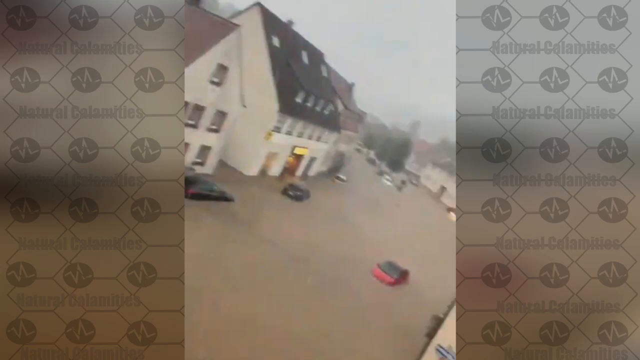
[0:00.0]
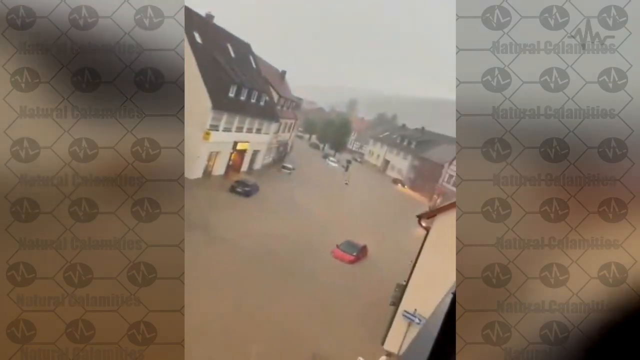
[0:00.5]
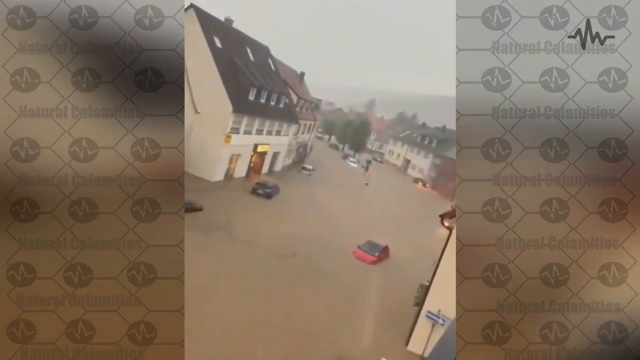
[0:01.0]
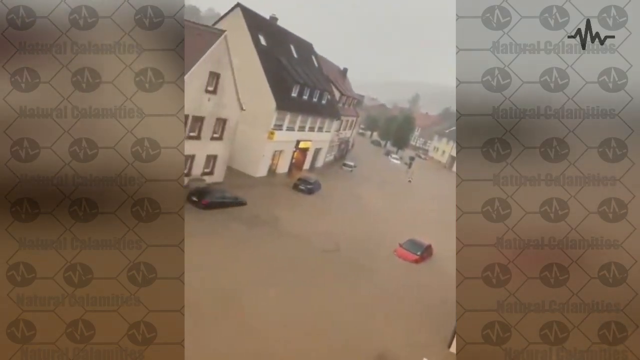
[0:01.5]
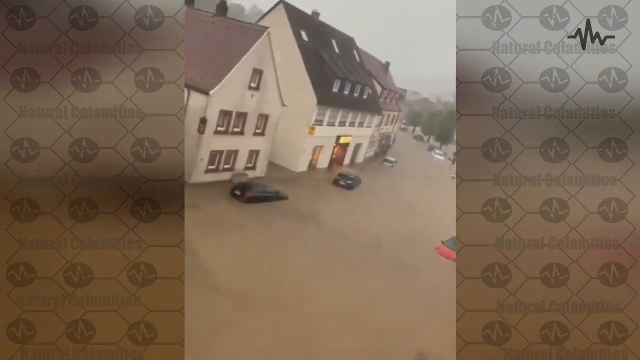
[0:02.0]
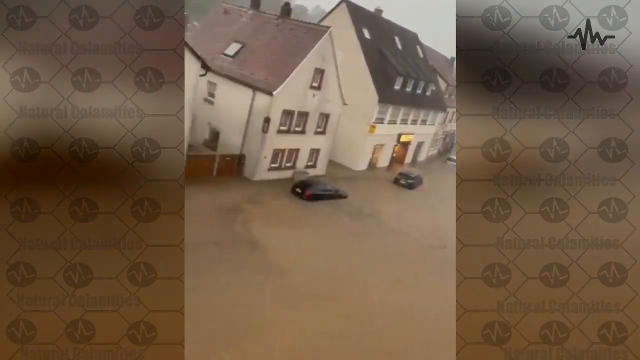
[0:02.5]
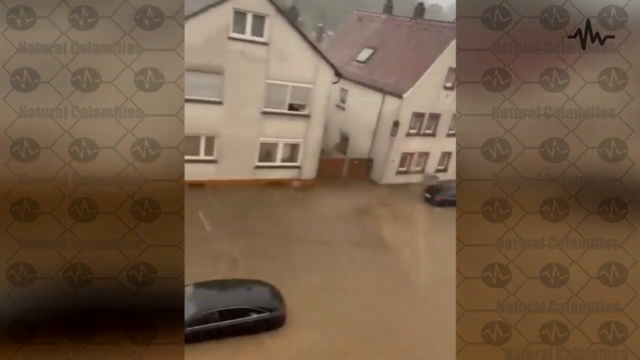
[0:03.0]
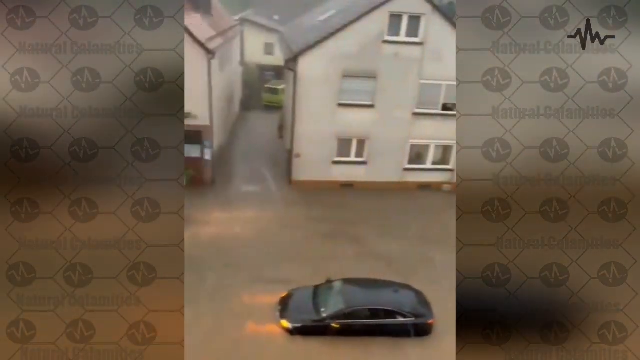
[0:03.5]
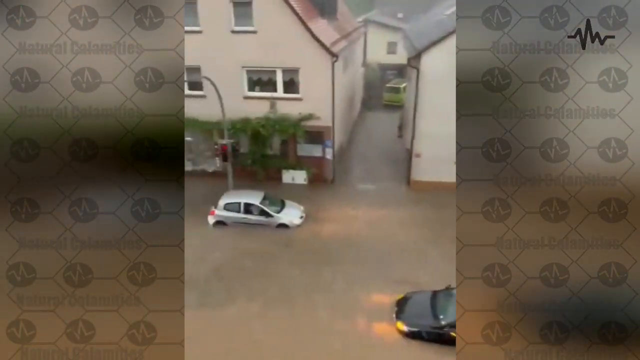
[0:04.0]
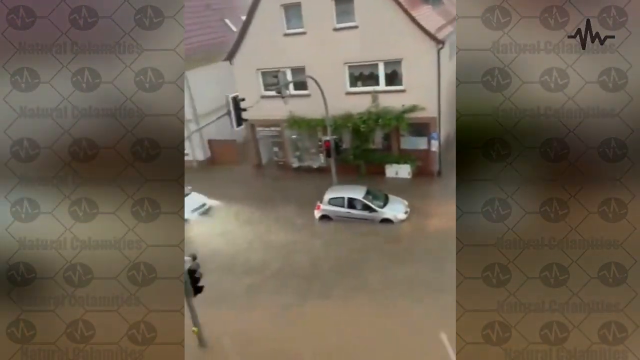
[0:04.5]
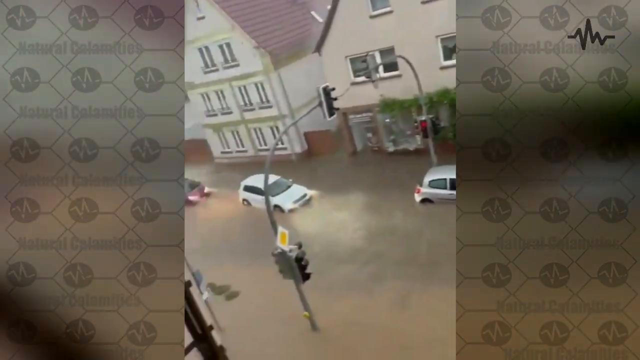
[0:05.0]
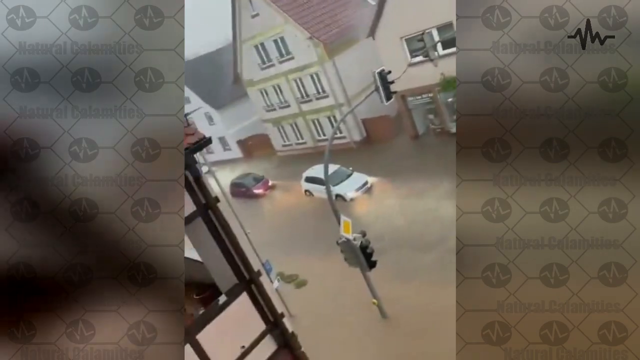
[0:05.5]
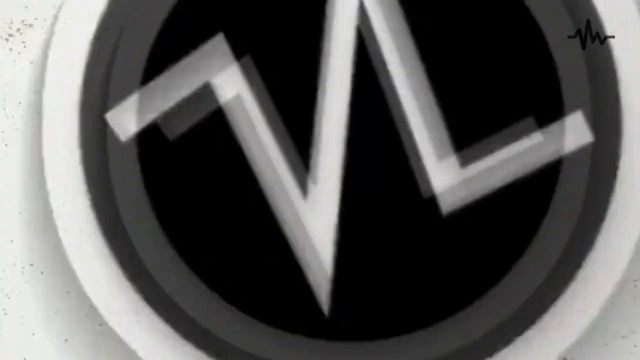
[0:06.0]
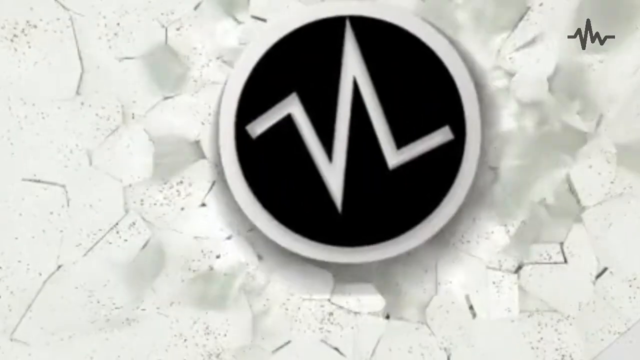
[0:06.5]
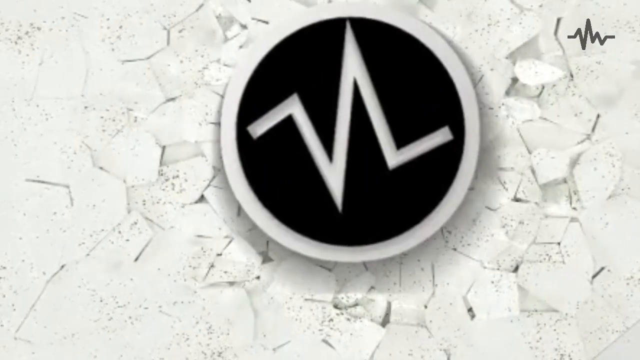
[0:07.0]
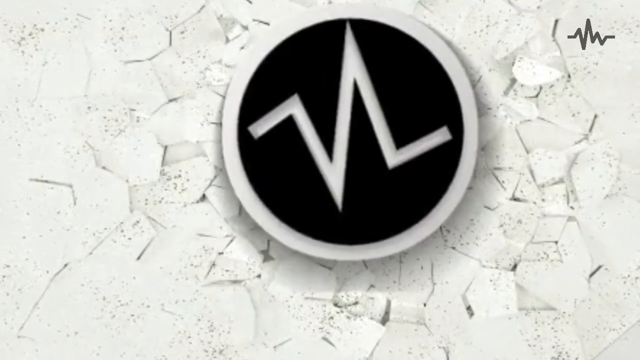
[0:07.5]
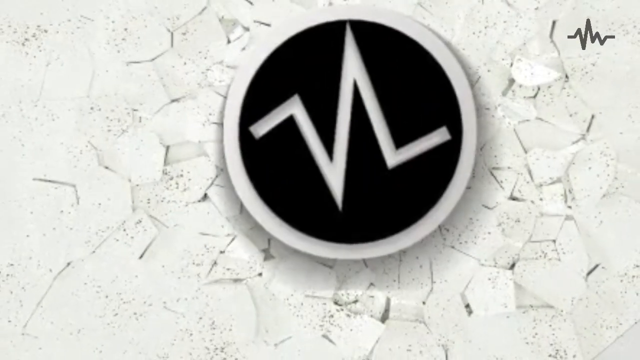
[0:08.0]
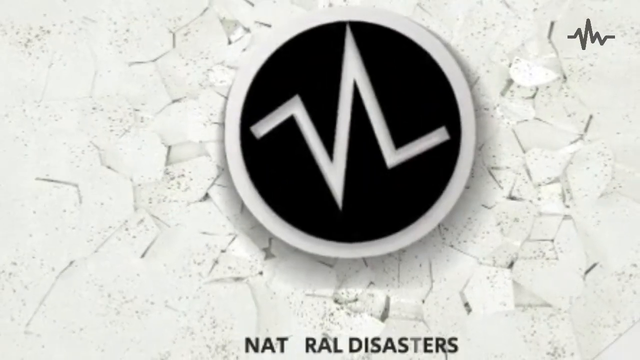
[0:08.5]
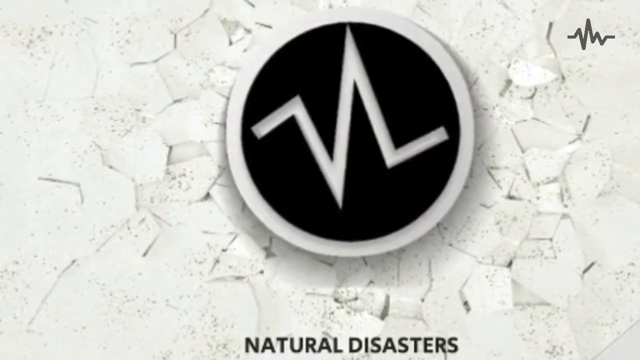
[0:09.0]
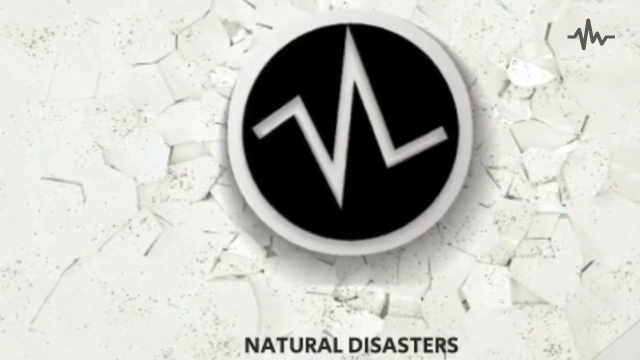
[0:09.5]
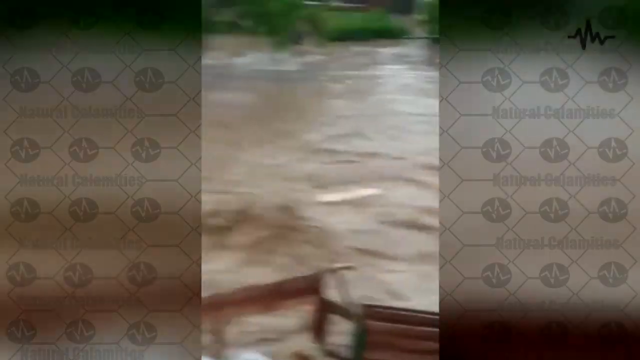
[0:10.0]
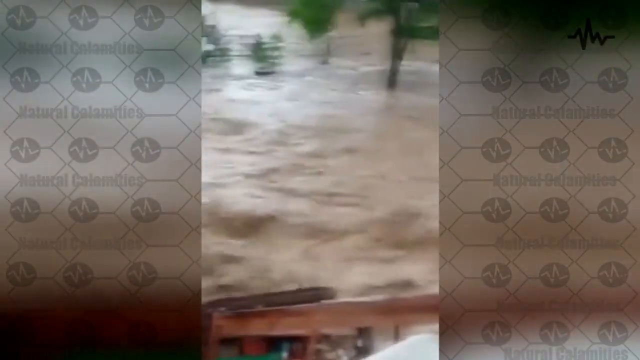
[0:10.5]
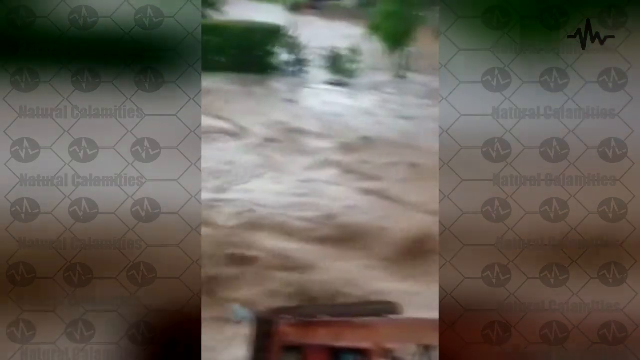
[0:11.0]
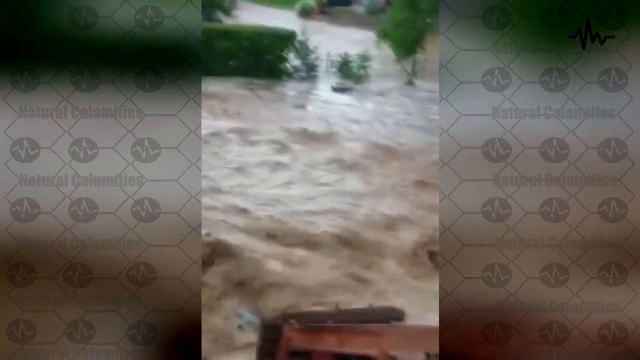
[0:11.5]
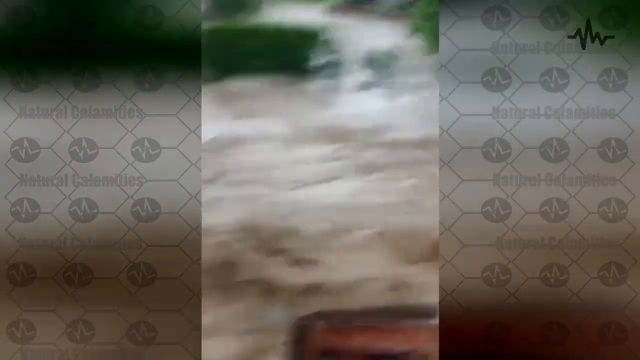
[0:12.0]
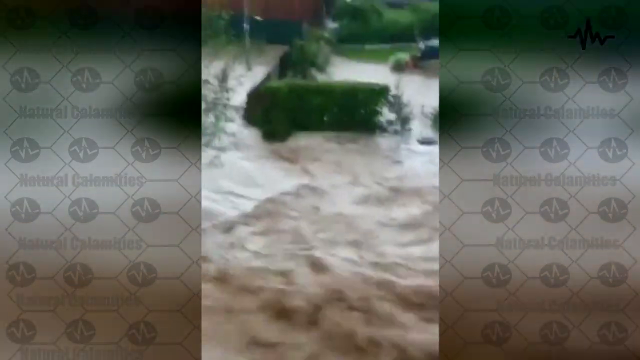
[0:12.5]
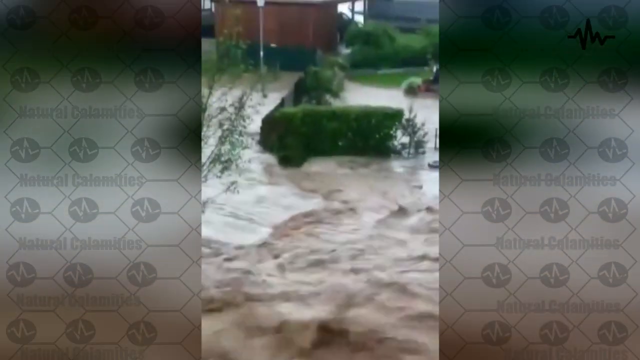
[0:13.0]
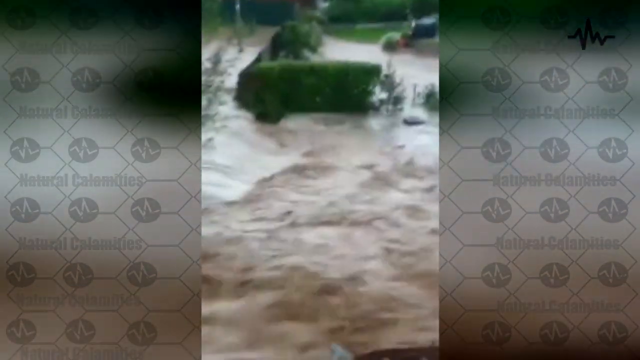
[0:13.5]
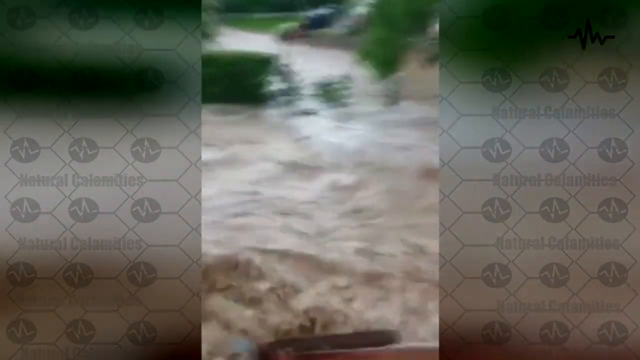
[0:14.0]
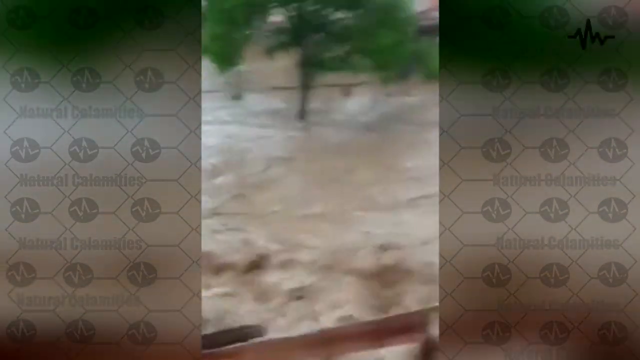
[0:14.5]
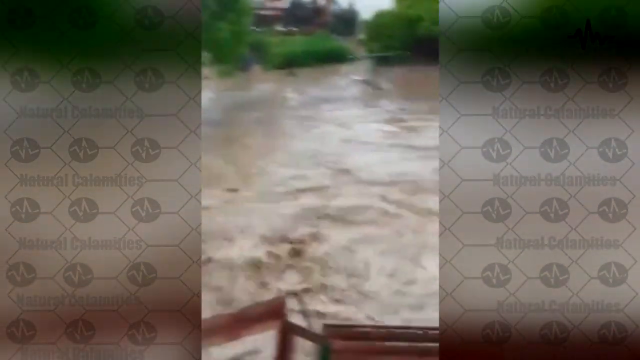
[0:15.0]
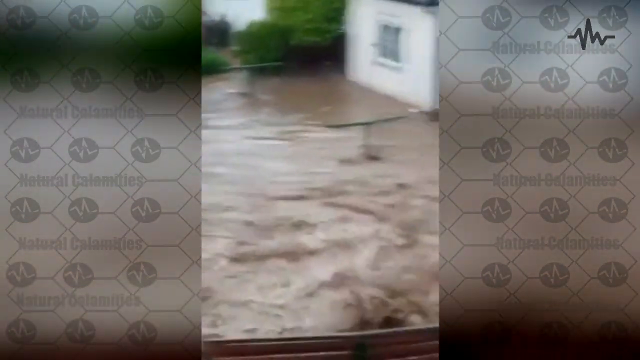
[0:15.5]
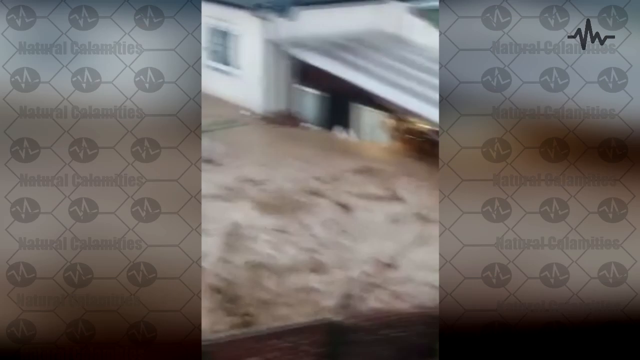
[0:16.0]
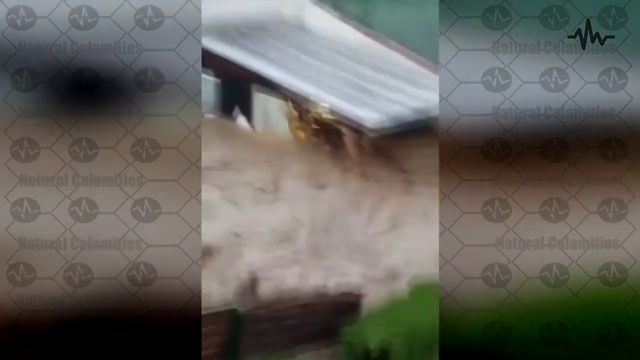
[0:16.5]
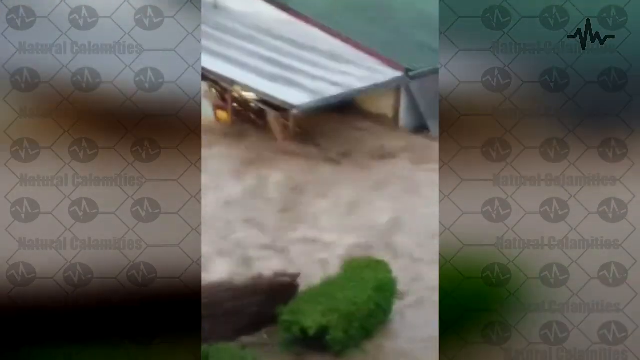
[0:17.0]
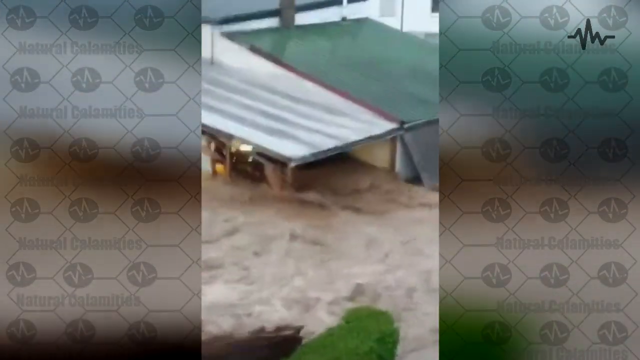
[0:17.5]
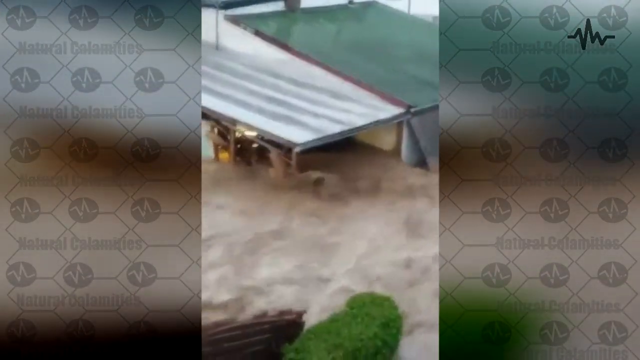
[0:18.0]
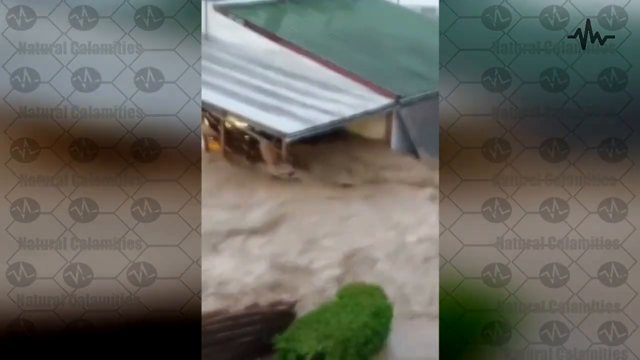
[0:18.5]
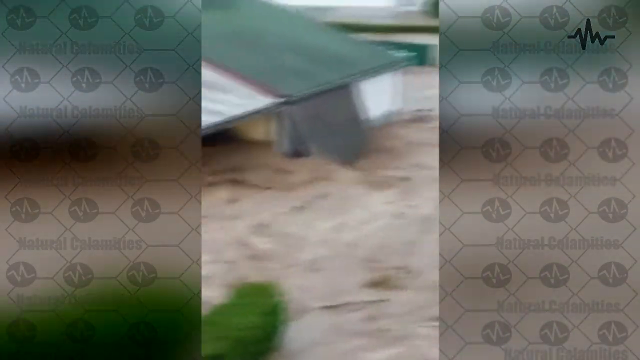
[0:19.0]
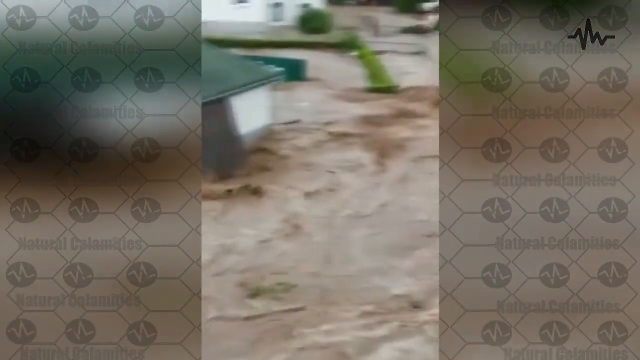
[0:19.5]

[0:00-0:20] A house, or rather an estate, is submerged in water, and cars in the scene are trying to drive through the water. The video comes from a channel called natural disasters. Water flows with great power in what appears to be a flood that now covers most of the low-lying buildings. The scene then changes to buildings and cars submerged in water that is standing still rather than moving. Large vehicles, like a Range Rover or Land Rover, are the ones pulling through.